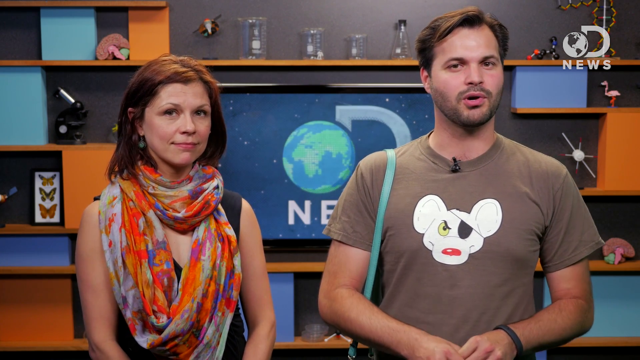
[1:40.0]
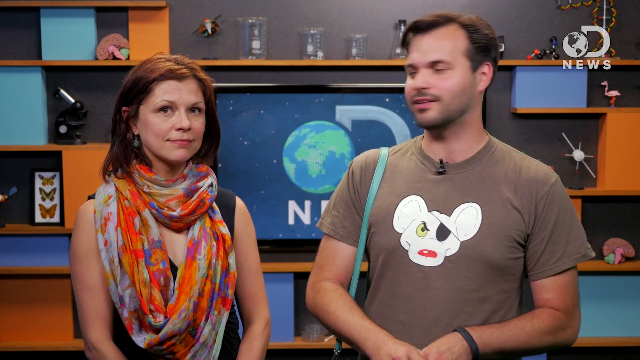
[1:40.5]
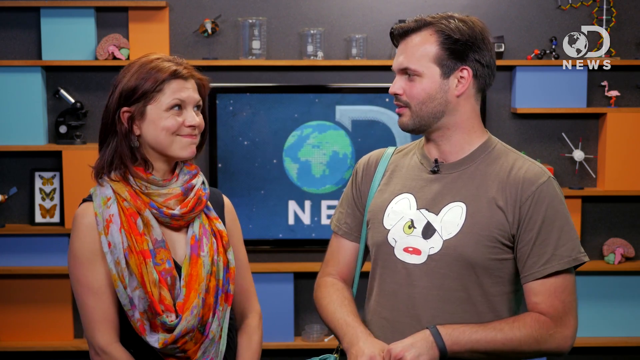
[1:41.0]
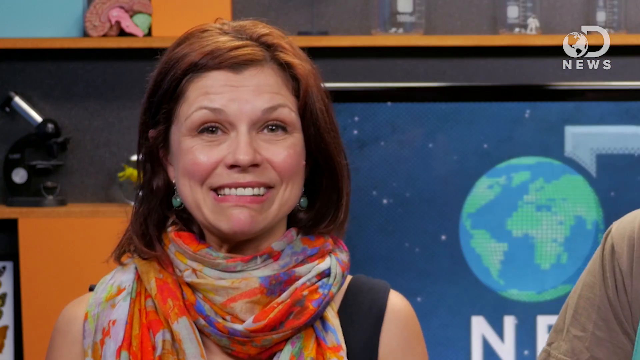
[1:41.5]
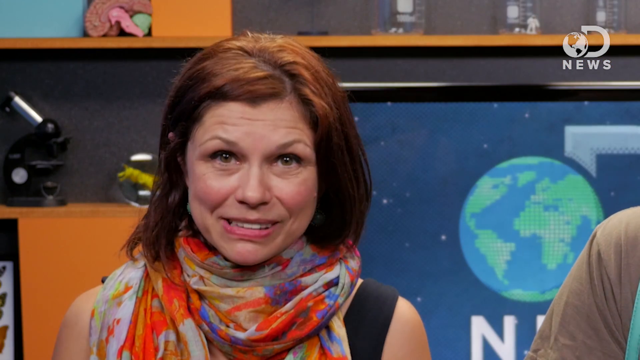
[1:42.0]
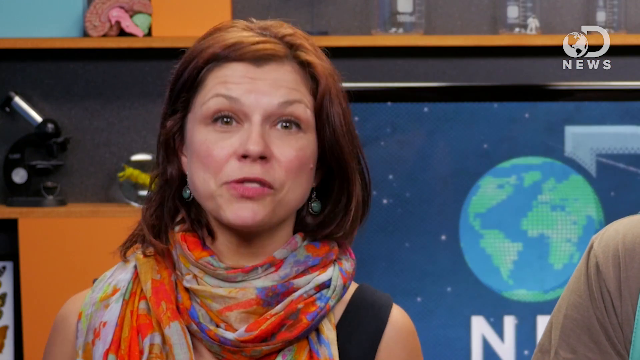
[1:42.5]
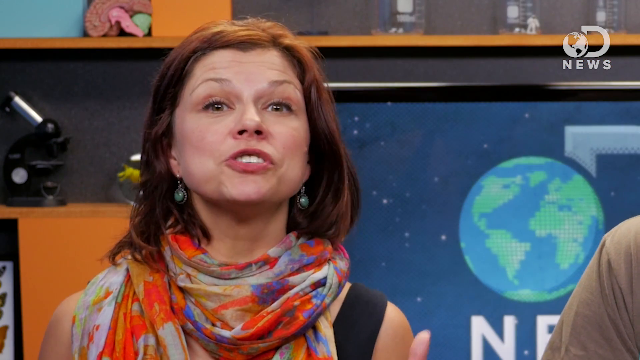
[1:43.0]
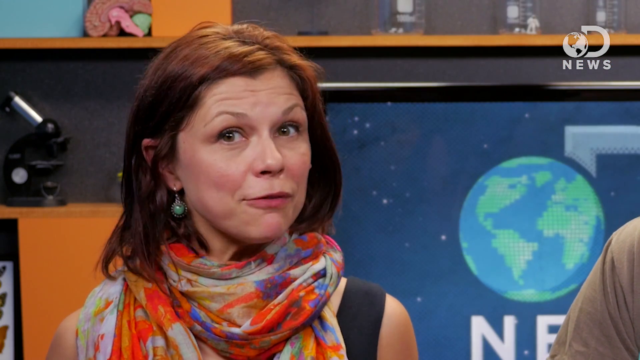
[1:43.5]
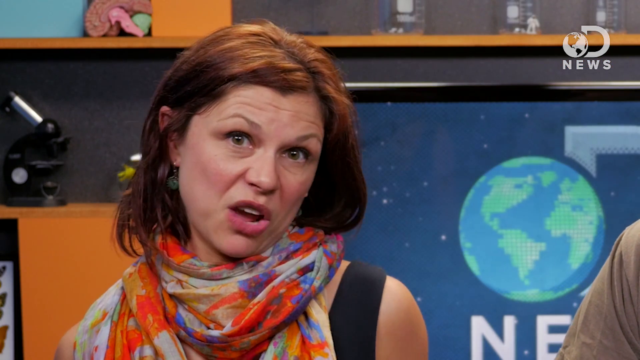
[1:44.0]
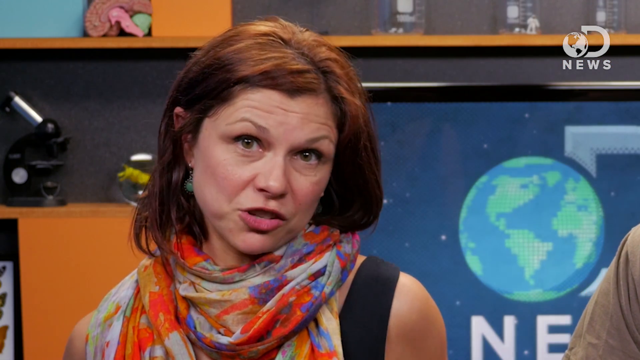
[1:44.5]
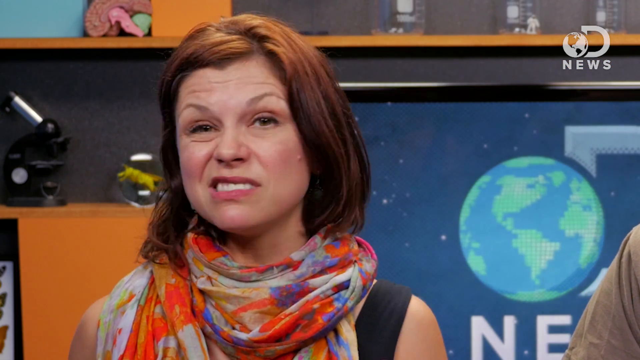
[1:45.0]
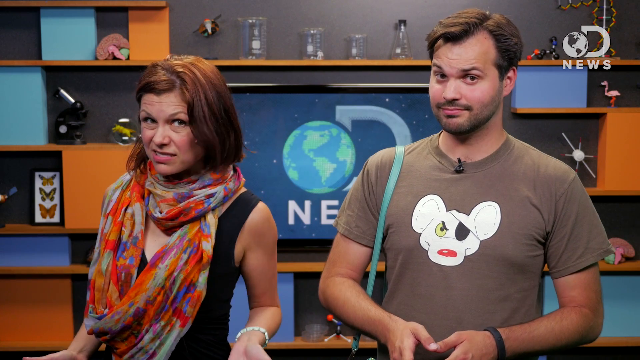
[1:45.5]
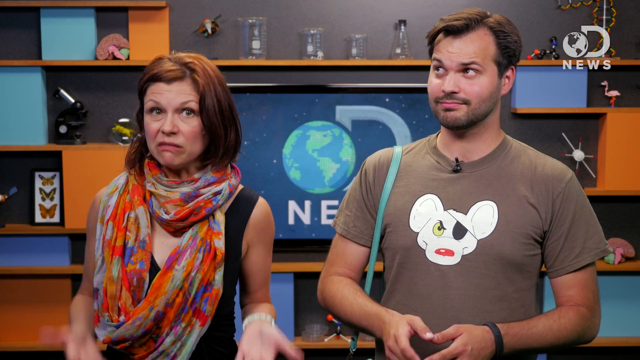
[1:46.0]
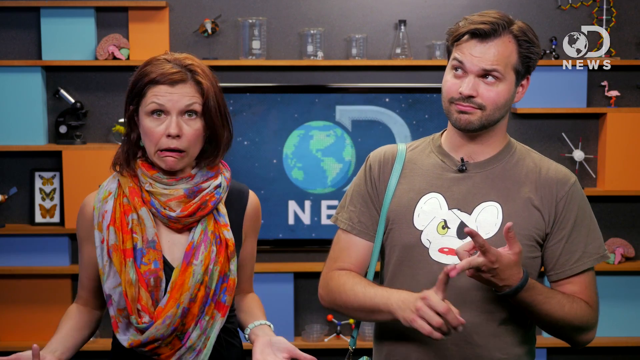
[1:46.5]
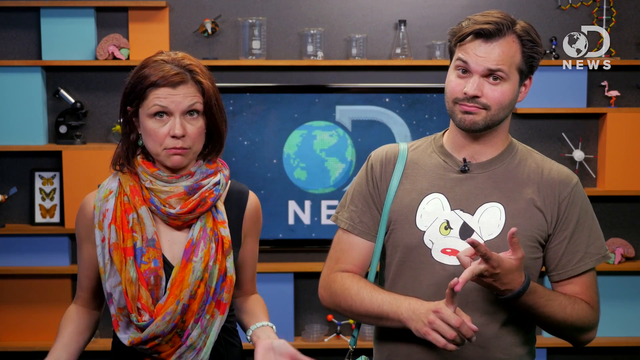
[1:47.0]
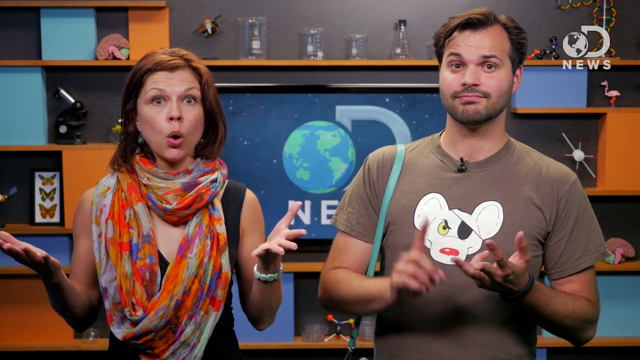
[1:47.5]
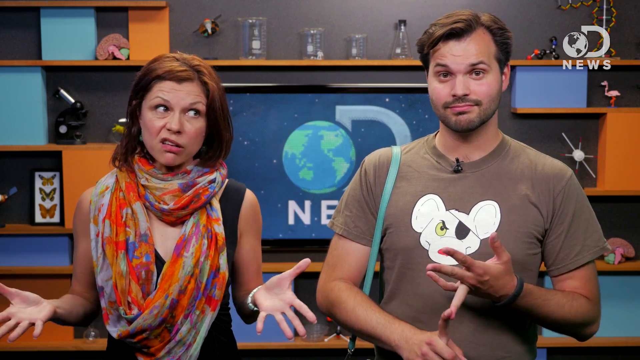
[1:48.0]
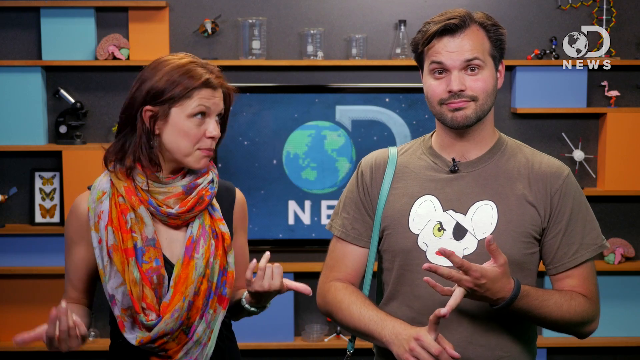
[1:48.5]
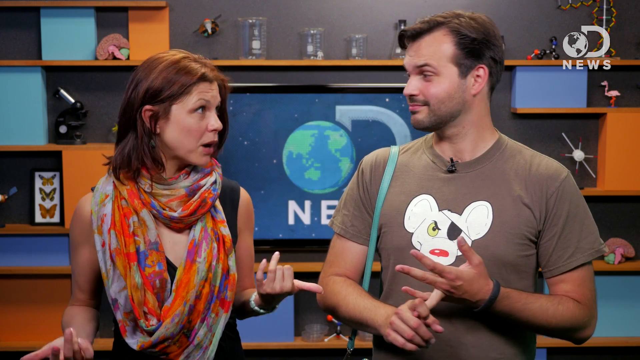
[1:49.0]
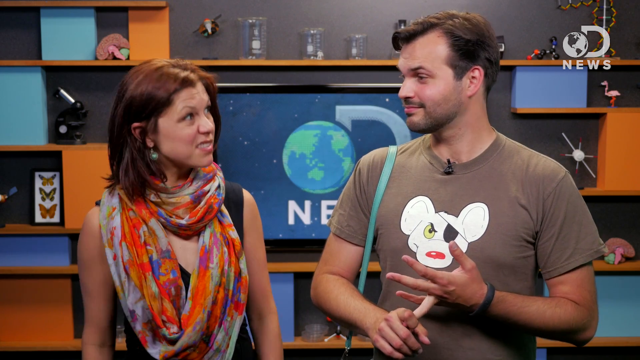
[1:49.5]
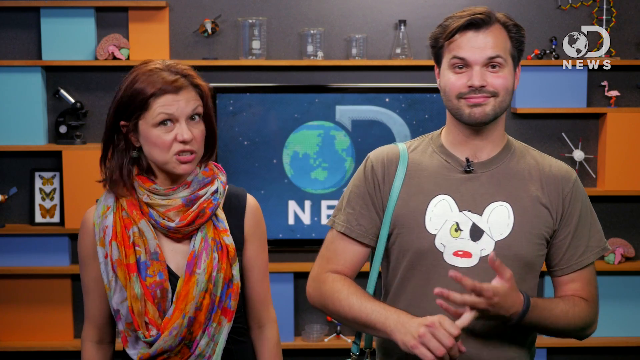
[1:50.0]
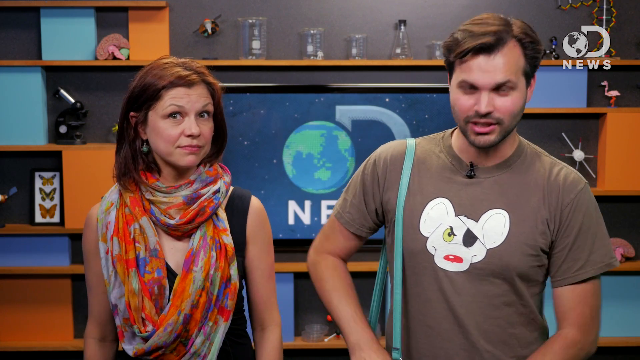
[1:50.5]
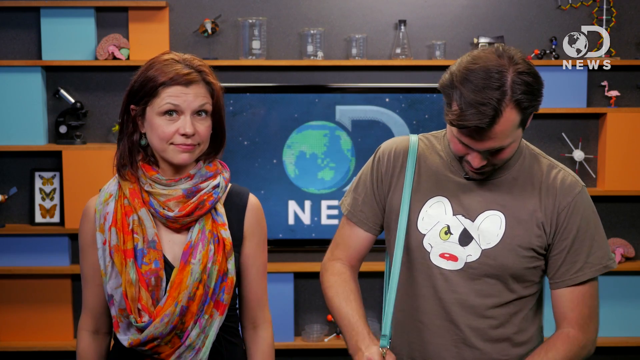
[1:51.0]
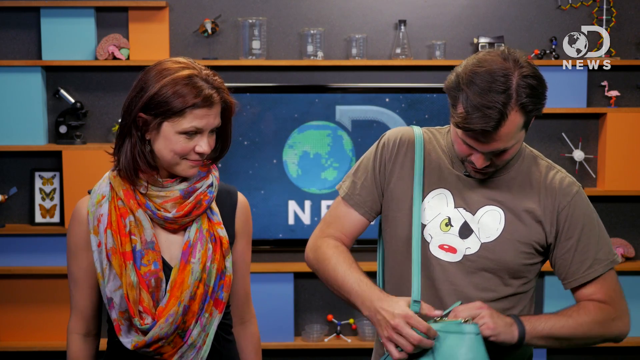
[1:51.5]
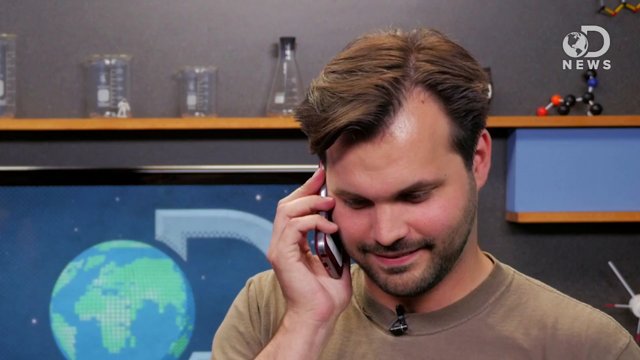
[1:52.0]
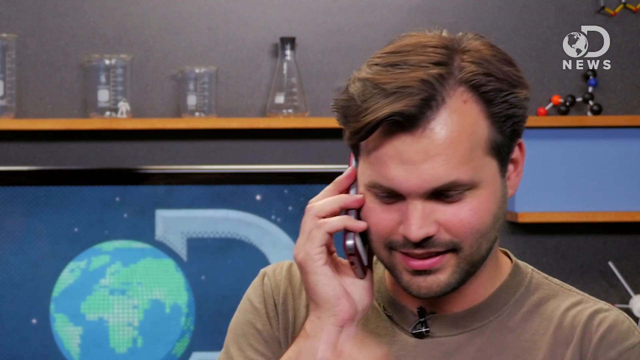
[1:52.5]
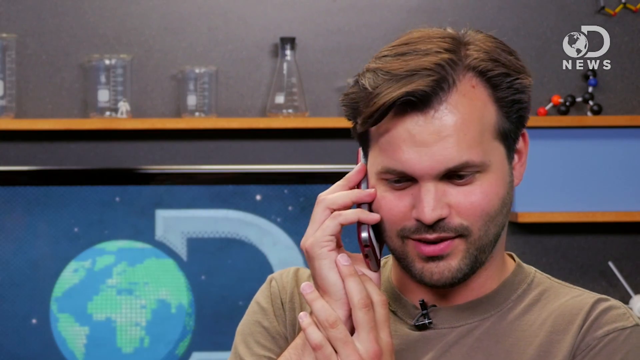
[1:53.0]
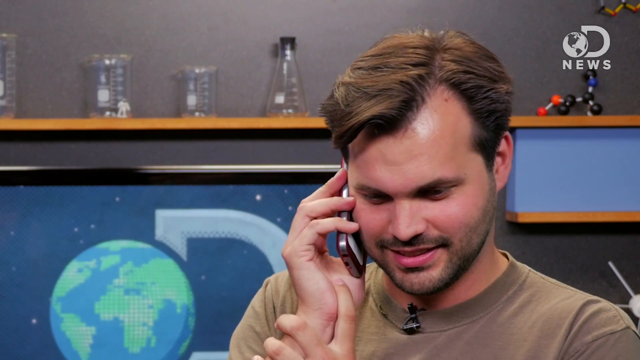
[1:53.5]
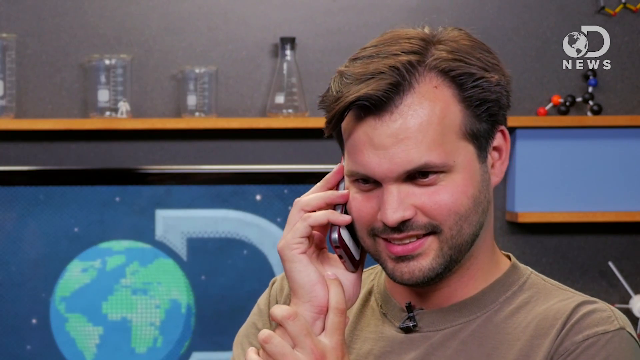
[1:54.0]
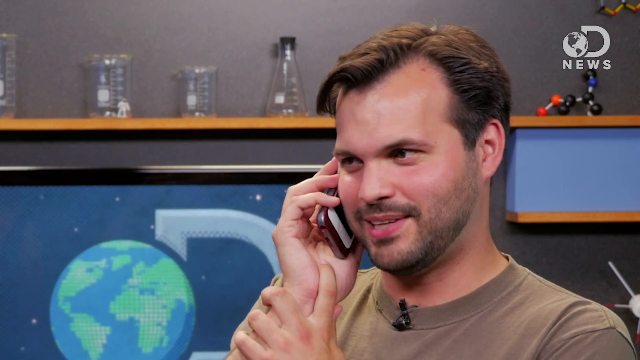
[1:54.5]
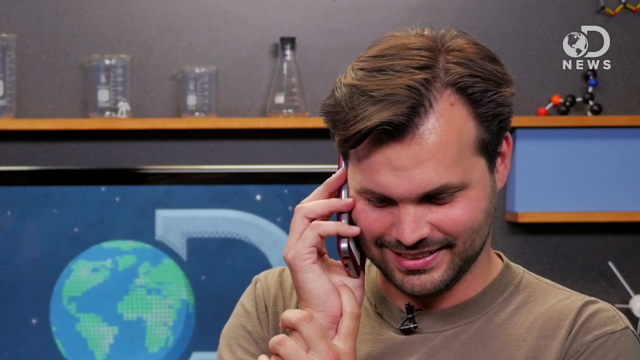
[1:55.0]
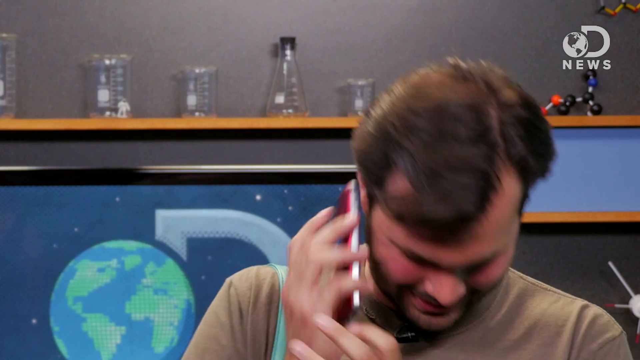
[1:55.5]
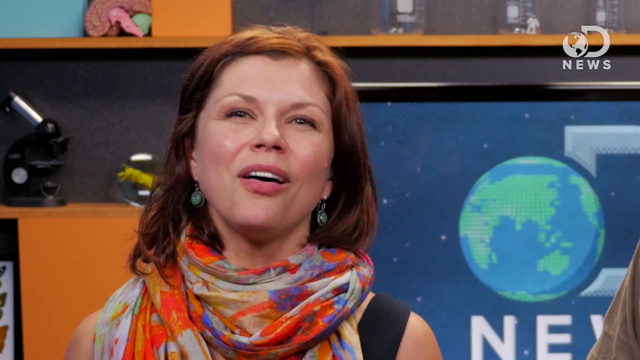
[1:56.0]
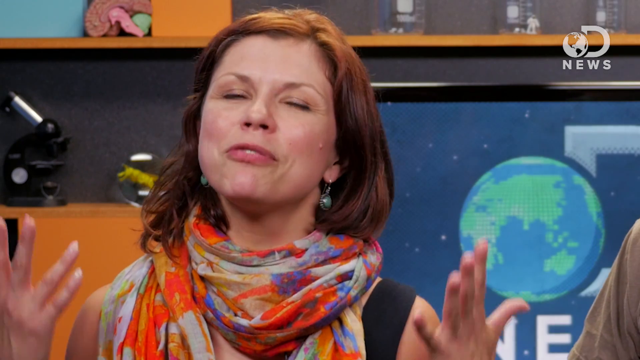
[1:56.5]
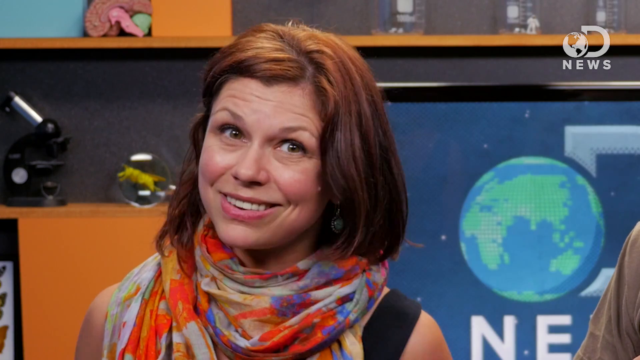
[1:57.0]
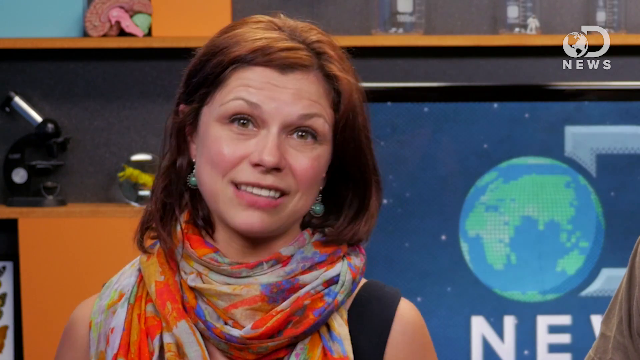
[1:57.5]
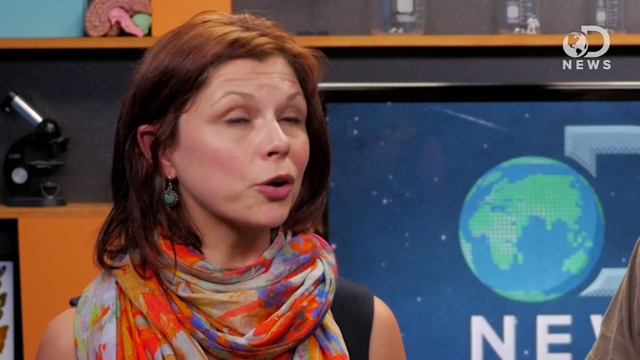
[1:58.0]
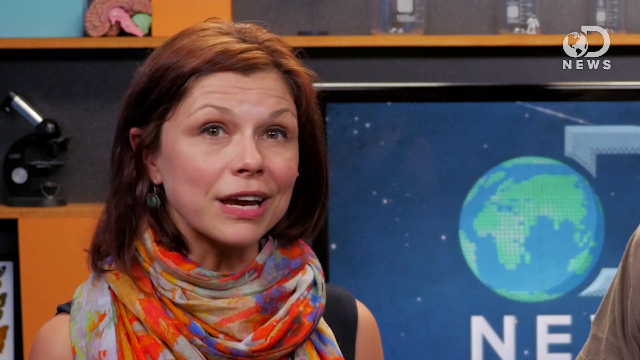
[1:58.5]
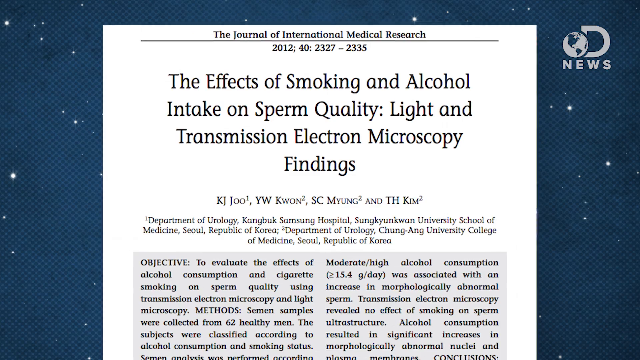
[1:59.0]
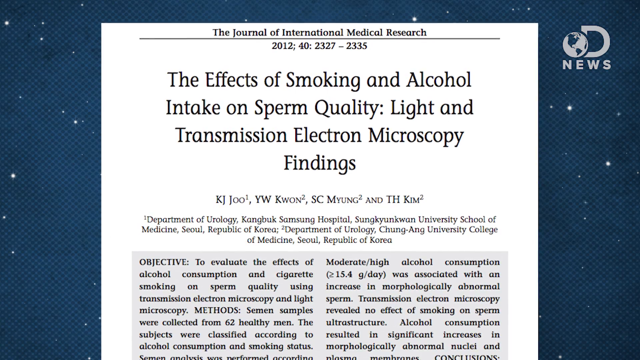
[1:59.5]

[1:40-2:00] The camera shows both reporters in a science video. He wears an almost greenish gray shirt with a white mouse on it that has an eye patch and red nose, and he is wearing the lady's teal green purse; only the strap is visible from this view. The news logo on the monitor in the background shows the Earth in green and blue and space that looks kind of bluish with stars. She wears a tie-dye-looking scarf and a sleeveless black shirt. A microphone or microscope is in the background. Next to a blue square, a model brain is up above the microscope. Science flasks are in the background. The DNews logo is in the upper right corner. There are a lot of blue and gray colors, a little orange, and black. The camera closes up on the lady, Caren, who has reddish brown hair and is speaking. Back on both of them, he digs into the blue purse, pulls out the cell phone and pretends to talk, and the focus returns to the lady. An article is shown that says "effect of smoking and alcohol intake on sperm quality, light, and transmission, electron microscopy findings."